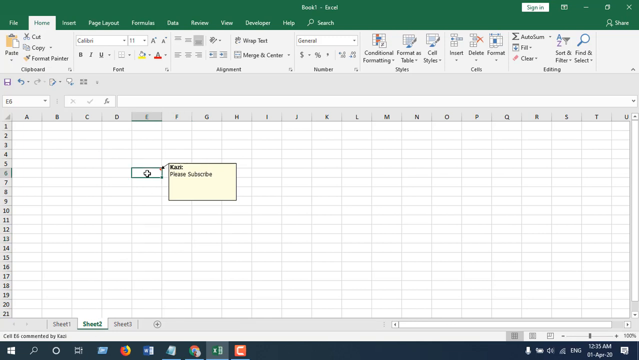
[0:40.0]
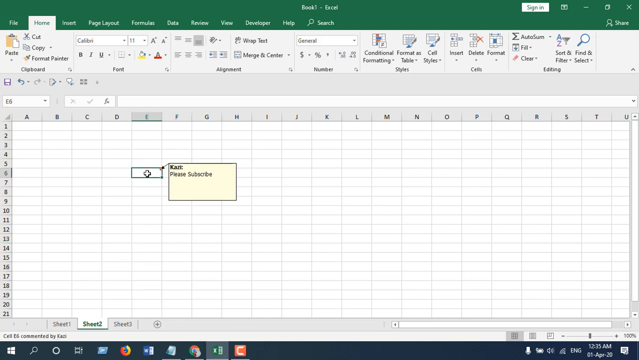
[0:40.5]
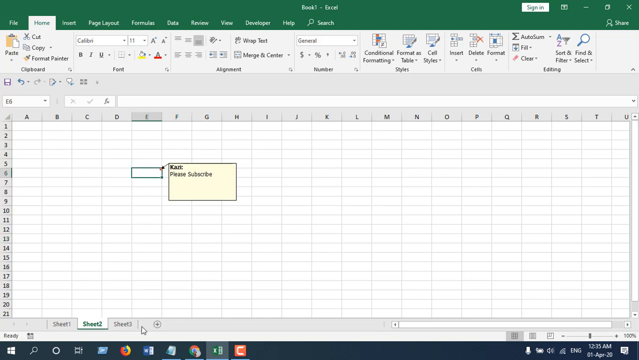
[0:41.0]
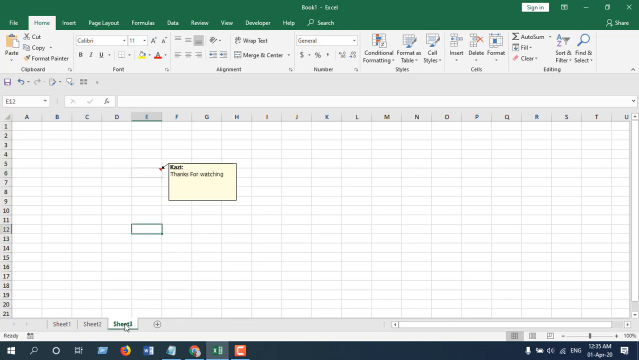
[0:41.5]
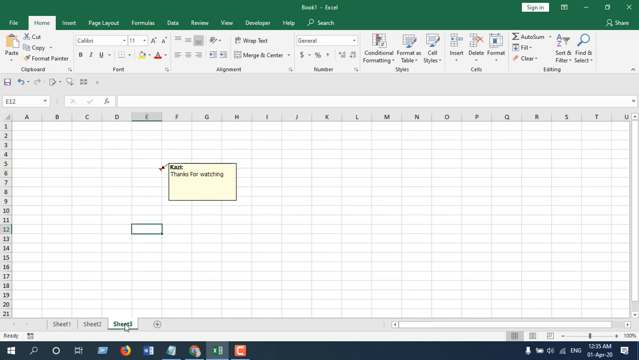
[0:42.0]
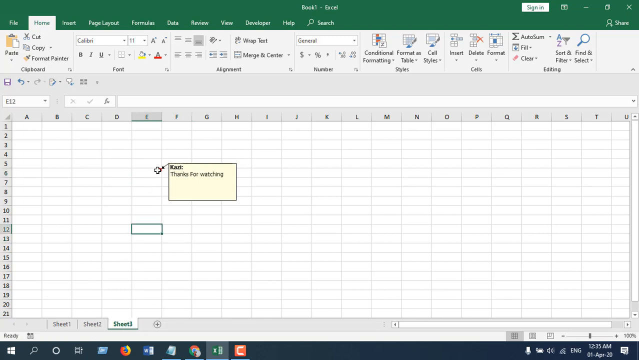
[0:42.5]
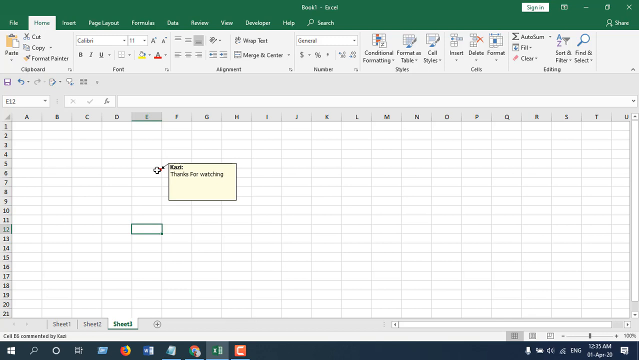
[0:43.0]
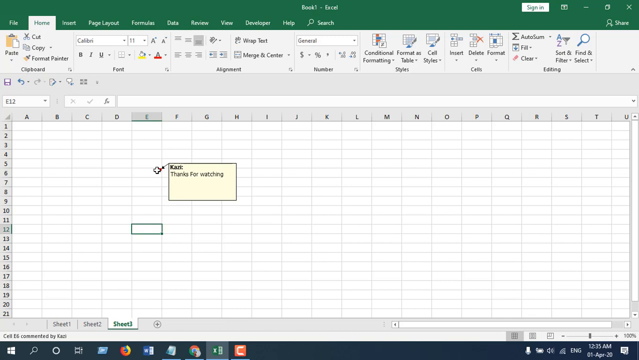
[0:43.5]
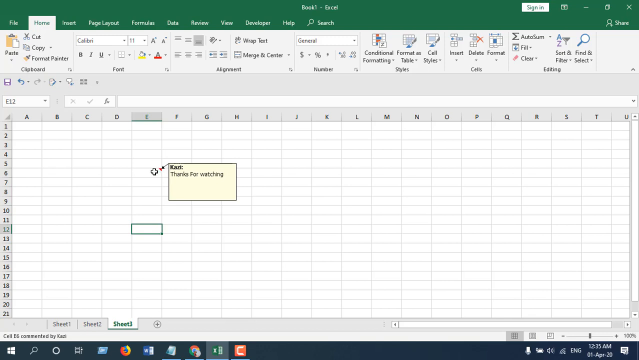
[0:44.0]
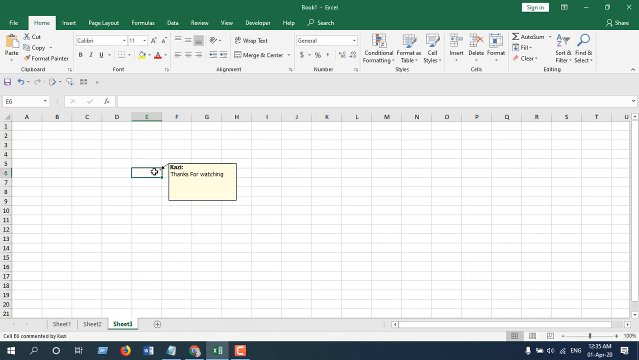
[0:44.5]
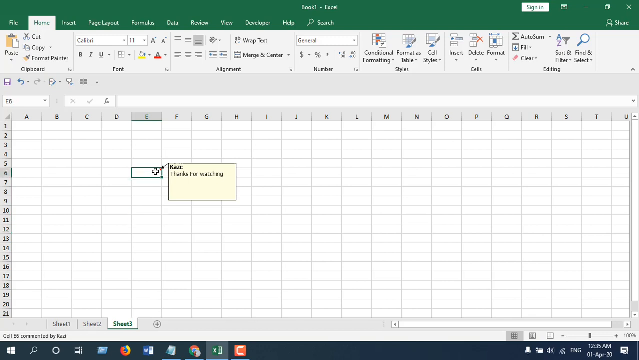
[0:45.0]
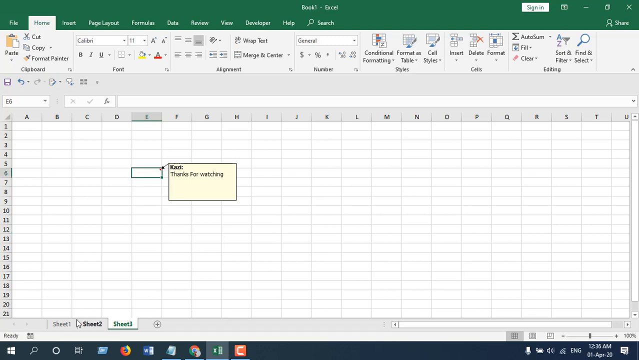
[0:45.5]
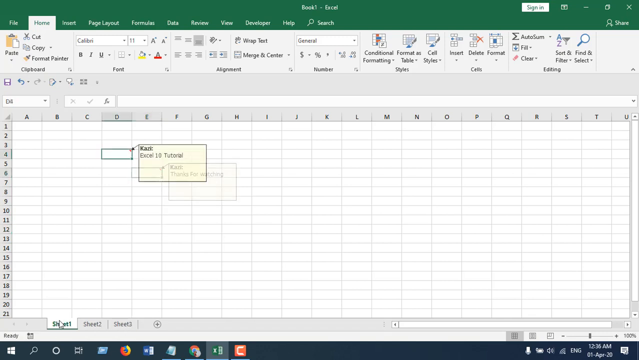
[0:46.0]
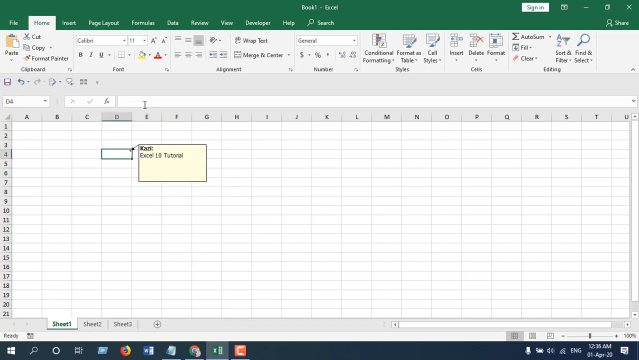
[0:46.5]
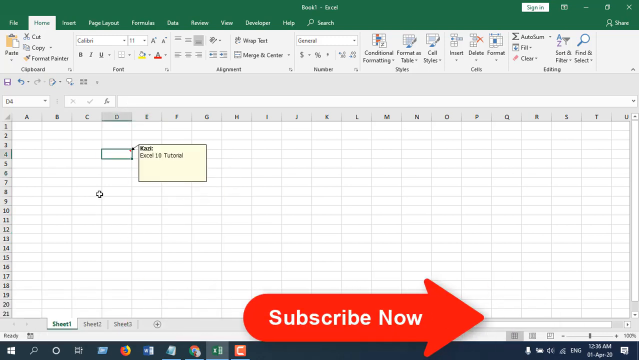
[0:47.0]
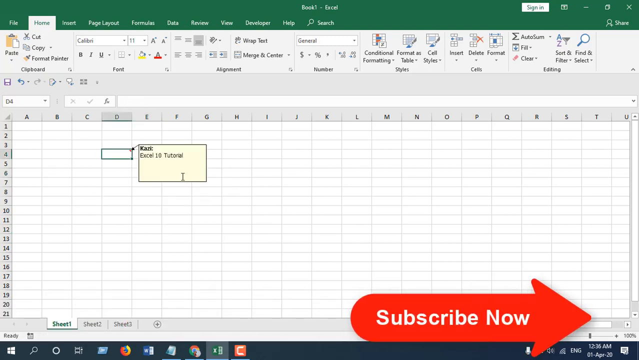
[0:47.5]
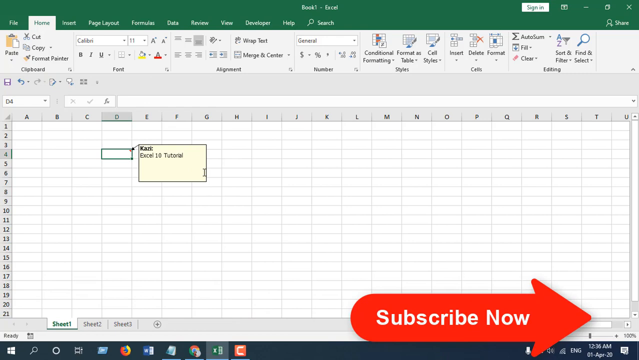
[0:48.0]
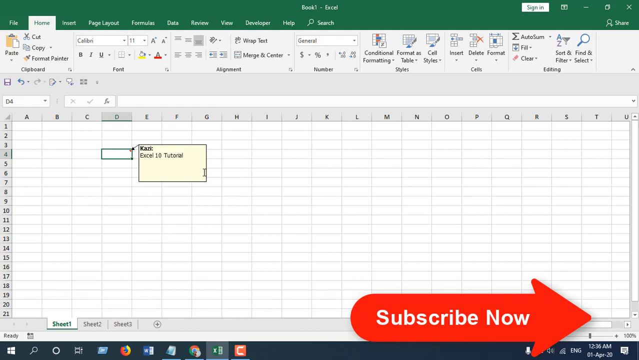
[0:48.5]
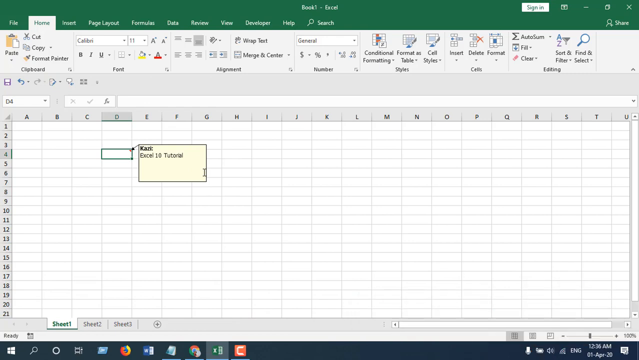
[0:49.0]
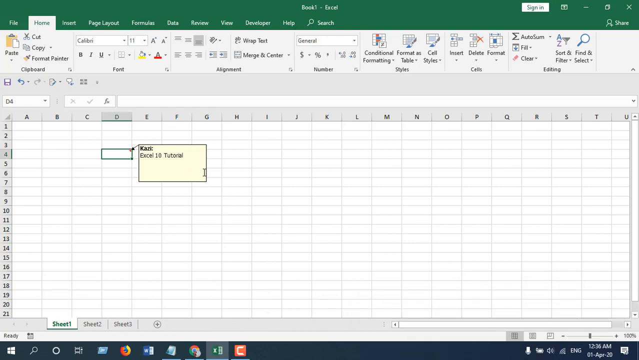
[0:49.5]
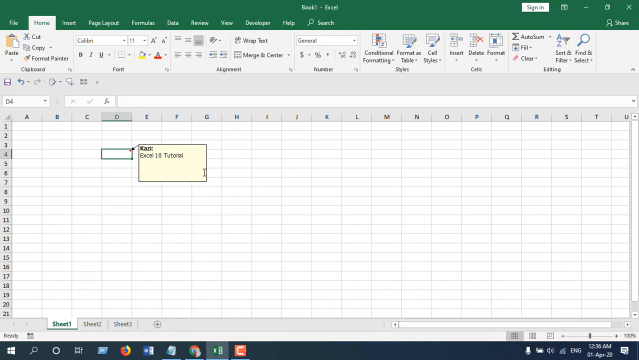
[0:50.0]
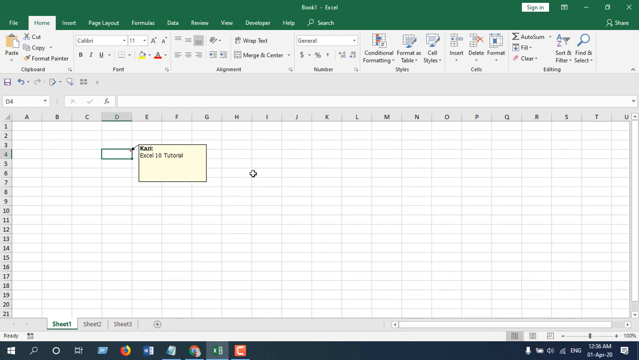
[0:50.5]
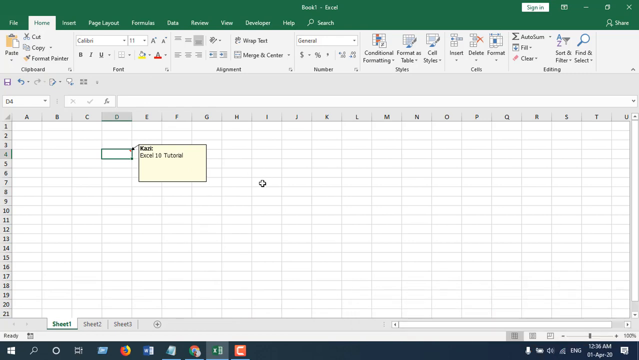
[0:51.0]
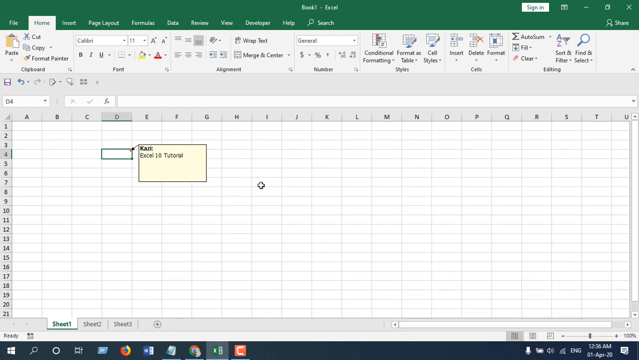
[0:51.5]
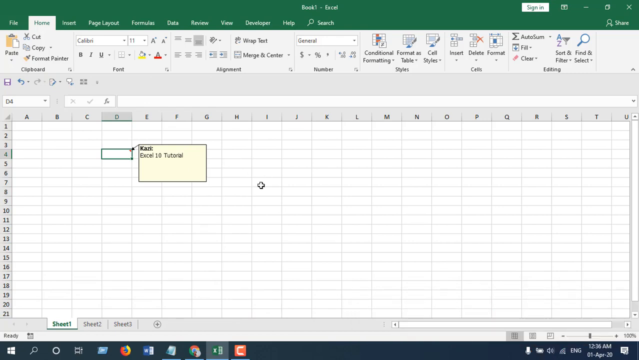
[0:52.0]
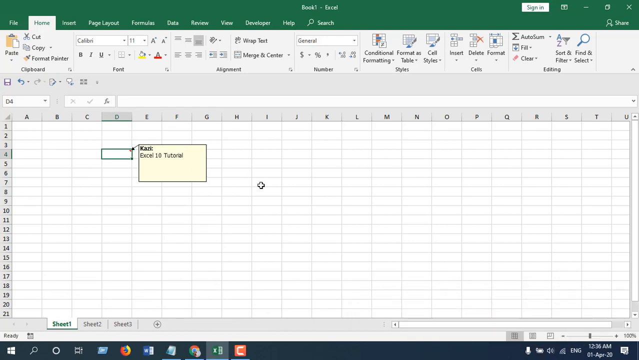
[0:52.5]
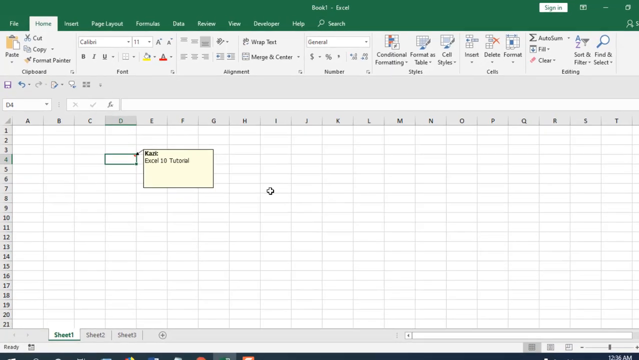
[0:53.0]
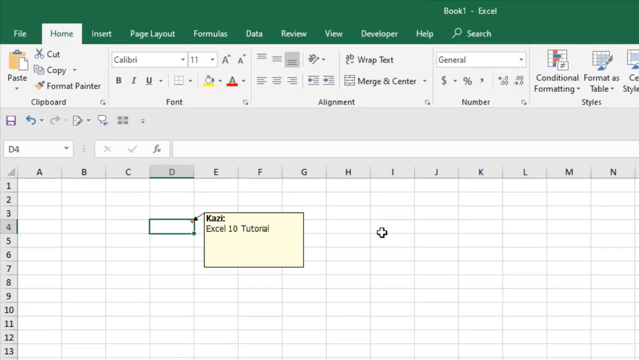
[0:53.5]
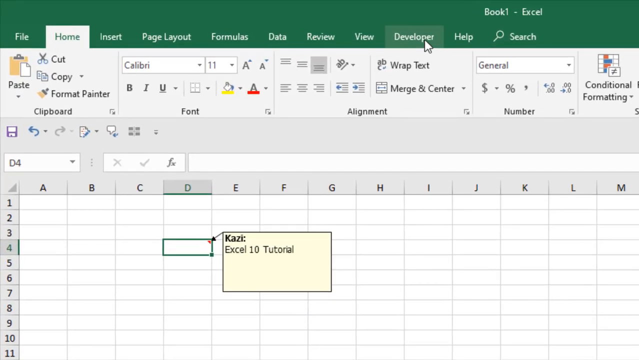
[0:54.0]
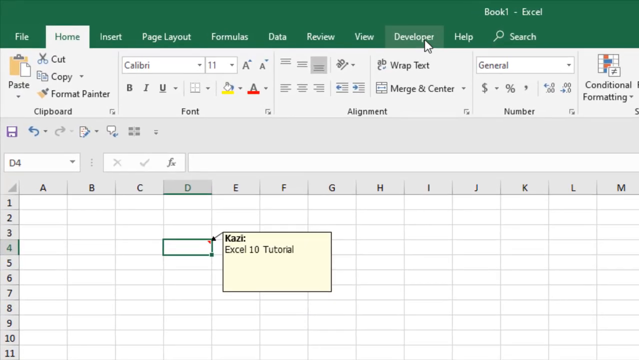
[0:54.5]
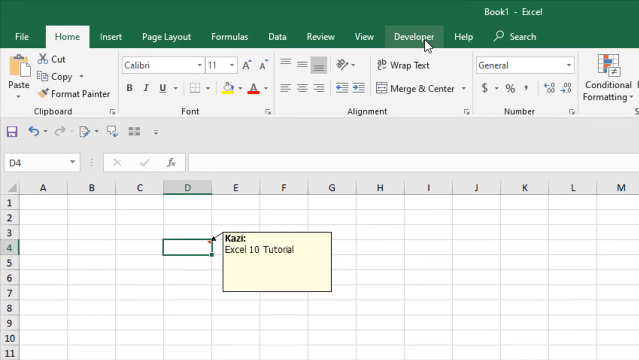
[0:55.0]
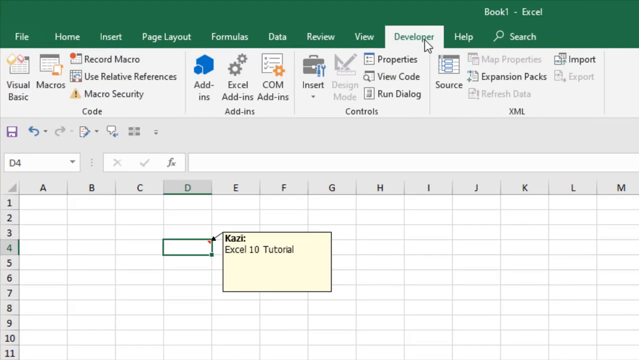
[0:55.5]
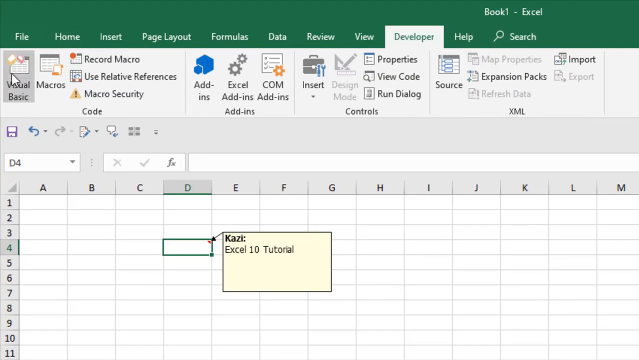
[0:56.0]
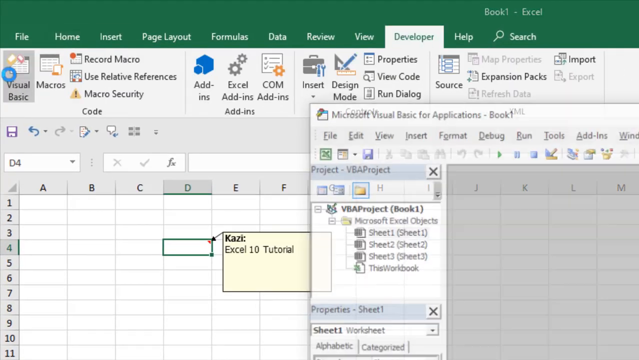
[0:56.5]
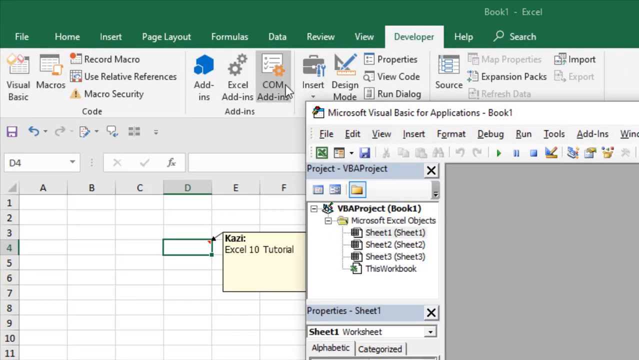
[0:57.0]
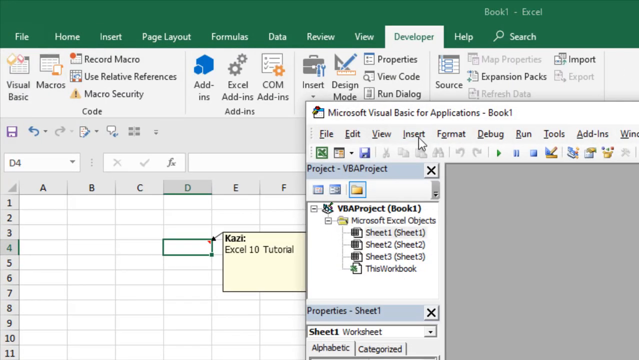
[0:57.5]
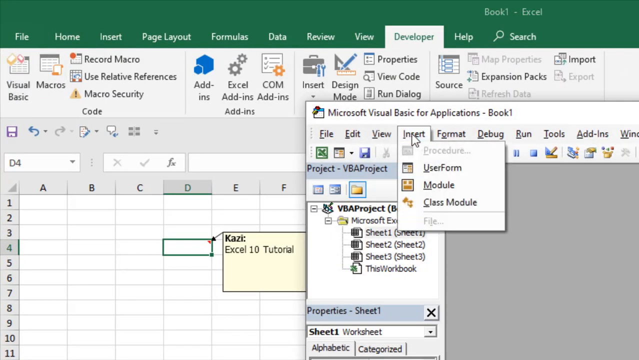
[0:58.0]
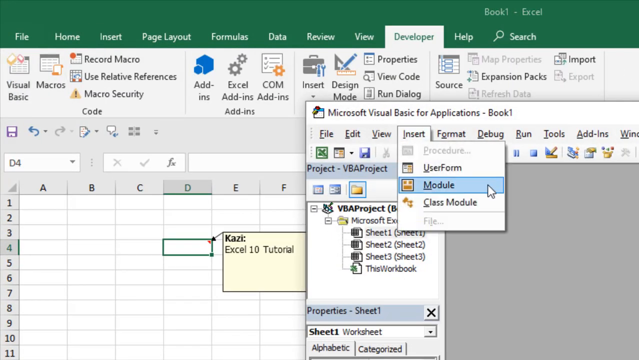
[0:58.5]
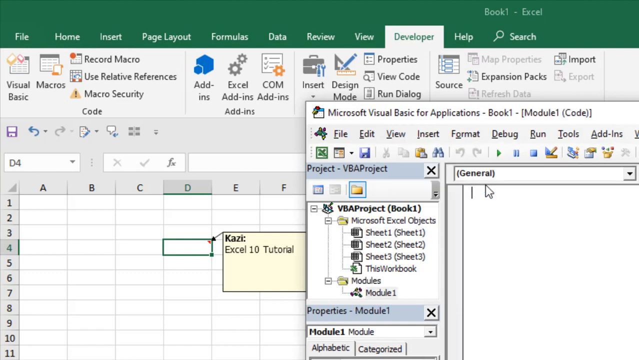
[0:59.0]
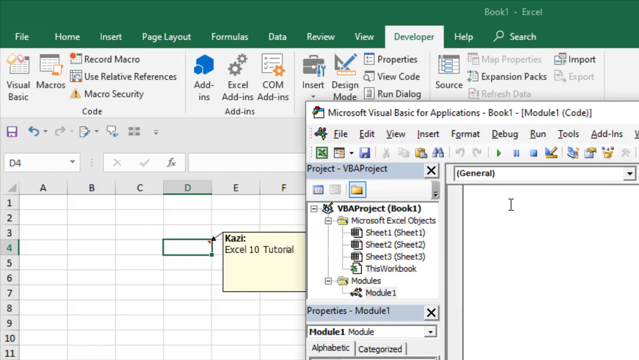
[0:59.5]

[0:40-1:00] The cursor moves to different places, highlighting various cells. A red arrow appears, races across from left to right with "subscribe now", and disappears. The view zooms in close to the yellow text box, which is still over columns F through H in rows 5 to 9. What appears to be the Visual Basic icon, the far-left icon near the top beneath the green banner, has been clicked, and a window pops up over the very right side of the yellow box, reading "Microsoft visual basic for applications book one". It has a menu across the top; "insert" is highlighted, then "module" in the drop-down menu. Rows on the left list different projects and sheets.